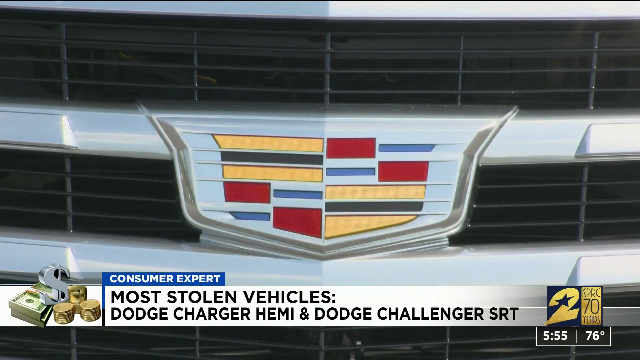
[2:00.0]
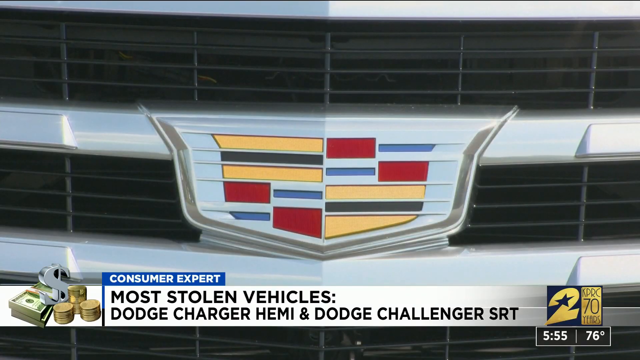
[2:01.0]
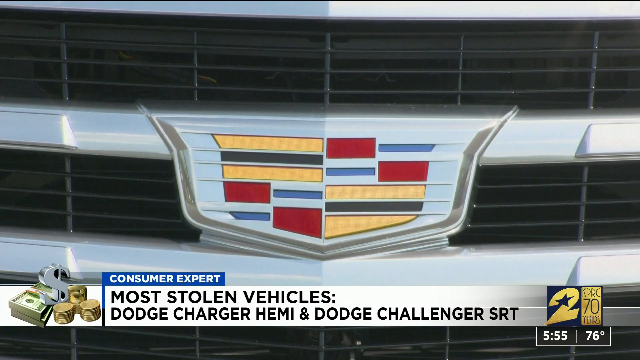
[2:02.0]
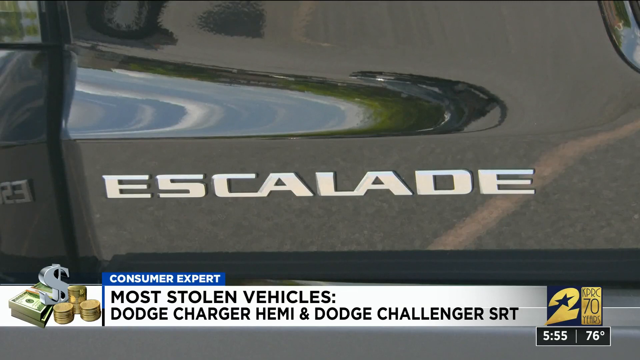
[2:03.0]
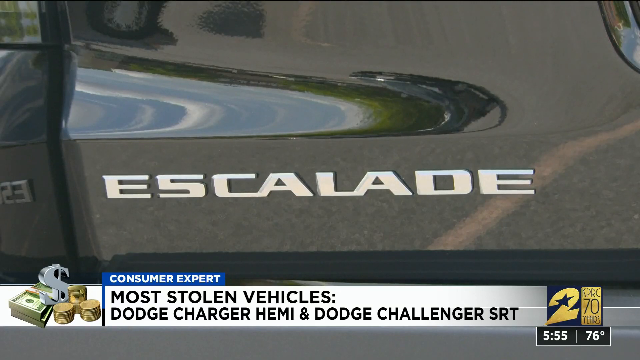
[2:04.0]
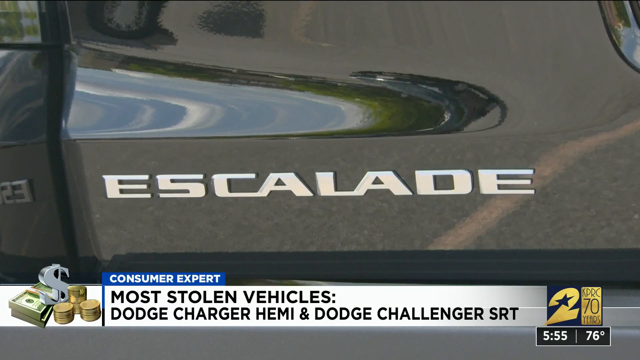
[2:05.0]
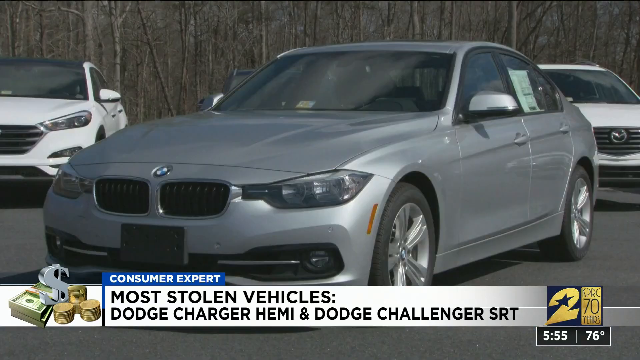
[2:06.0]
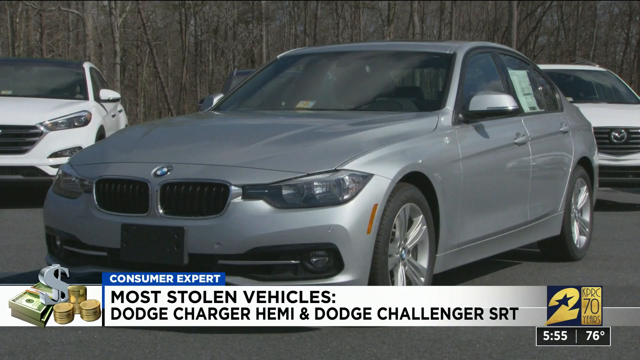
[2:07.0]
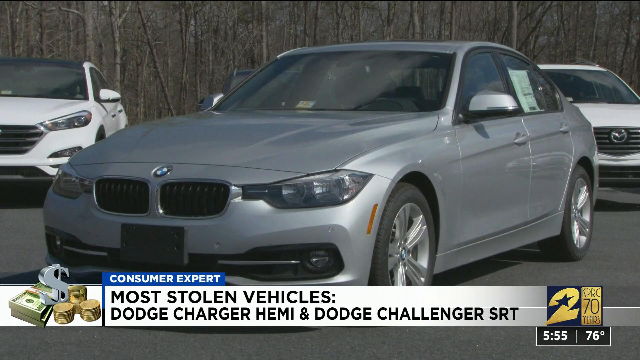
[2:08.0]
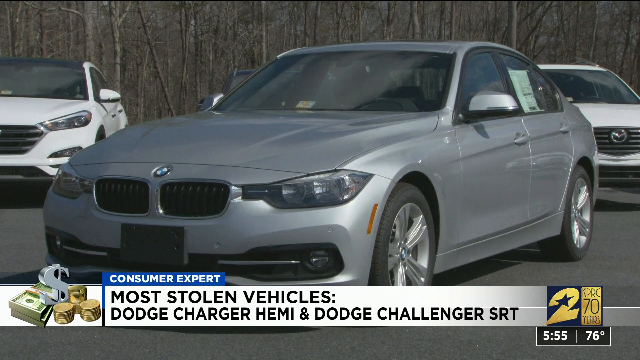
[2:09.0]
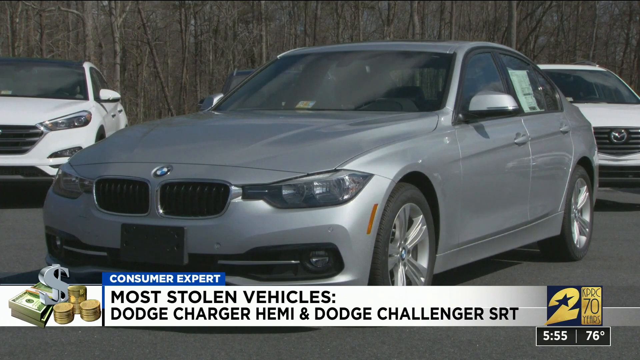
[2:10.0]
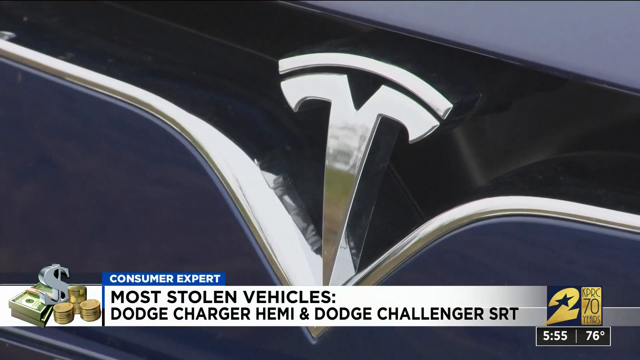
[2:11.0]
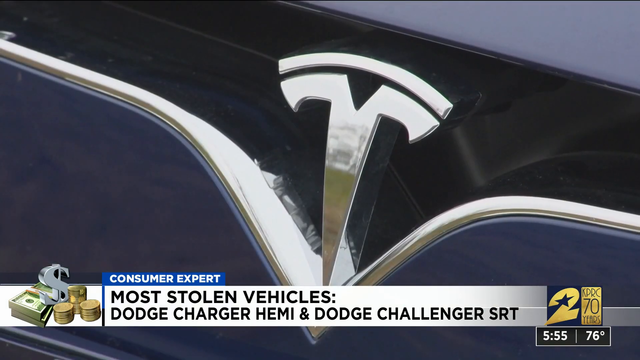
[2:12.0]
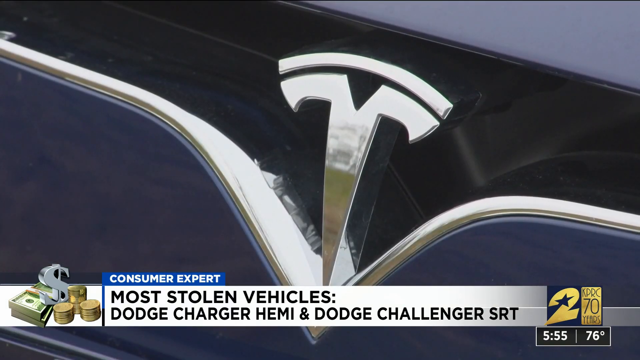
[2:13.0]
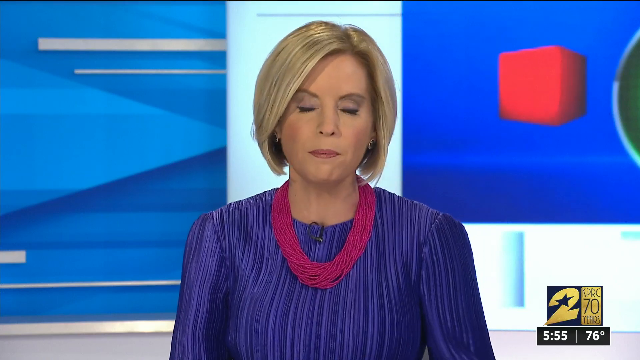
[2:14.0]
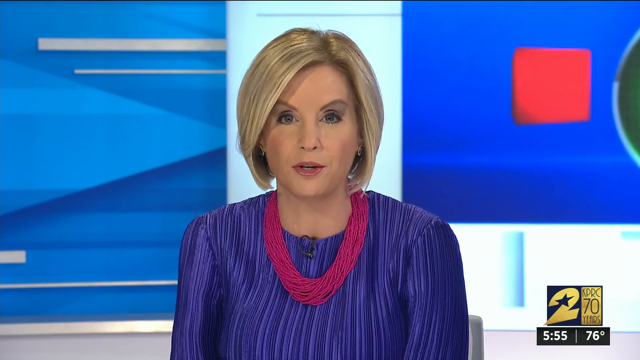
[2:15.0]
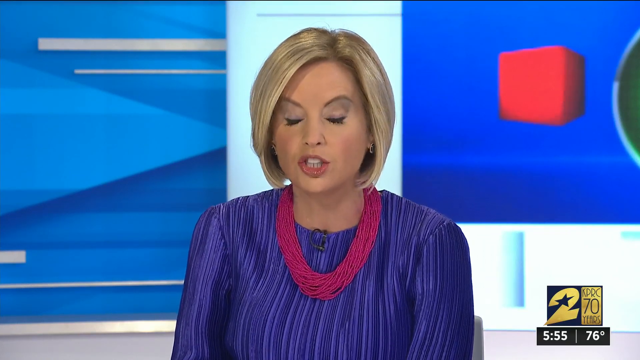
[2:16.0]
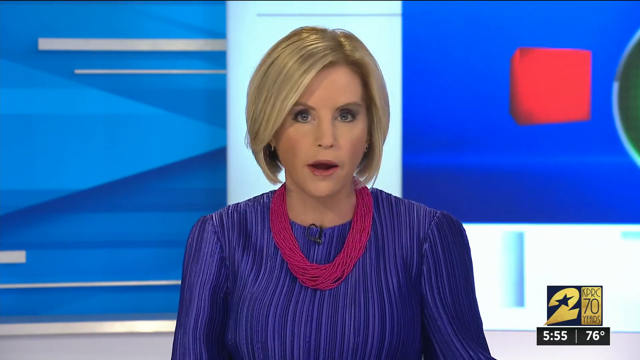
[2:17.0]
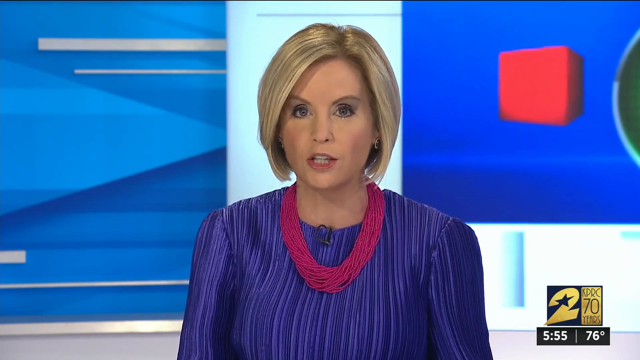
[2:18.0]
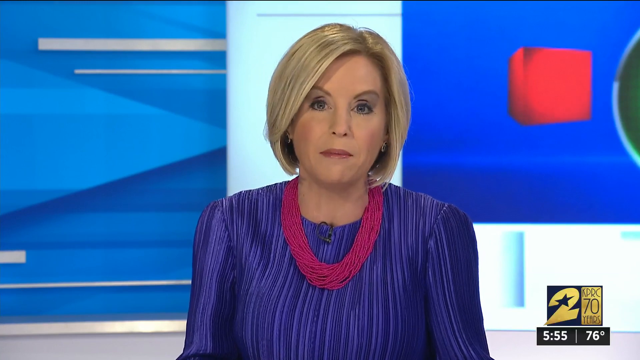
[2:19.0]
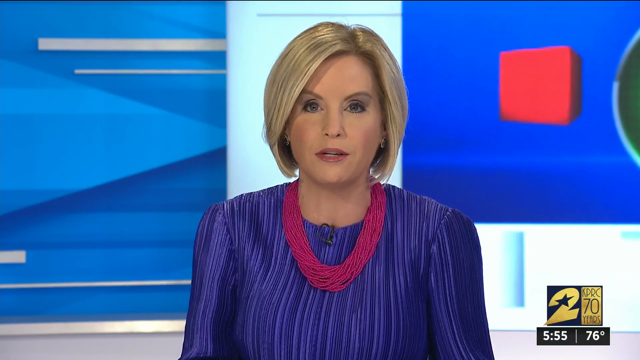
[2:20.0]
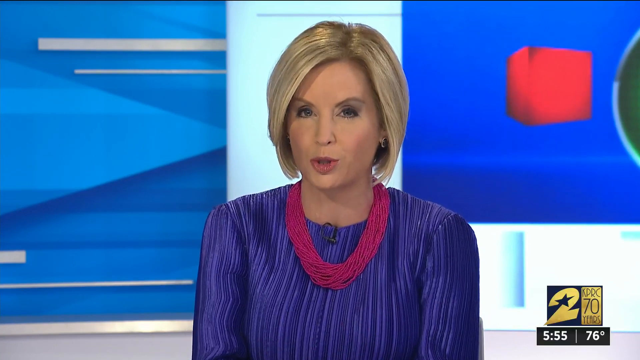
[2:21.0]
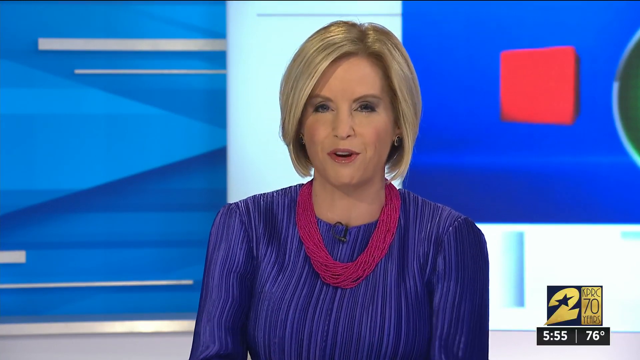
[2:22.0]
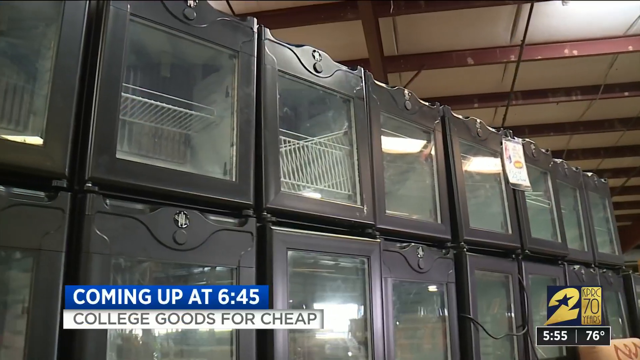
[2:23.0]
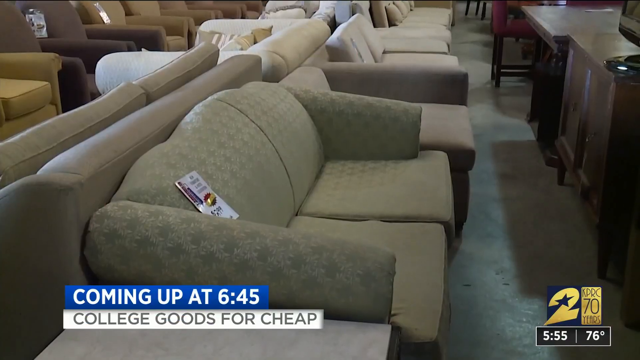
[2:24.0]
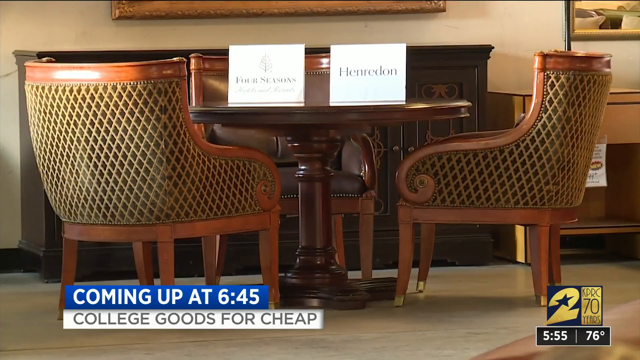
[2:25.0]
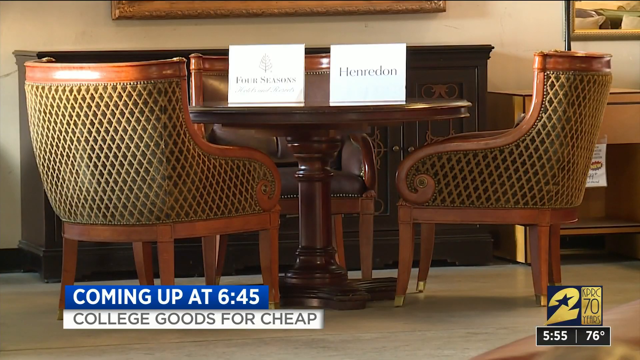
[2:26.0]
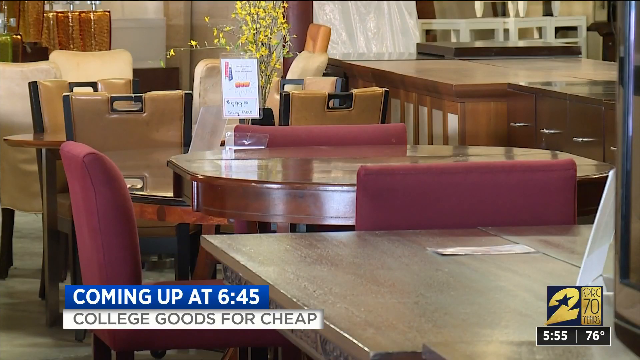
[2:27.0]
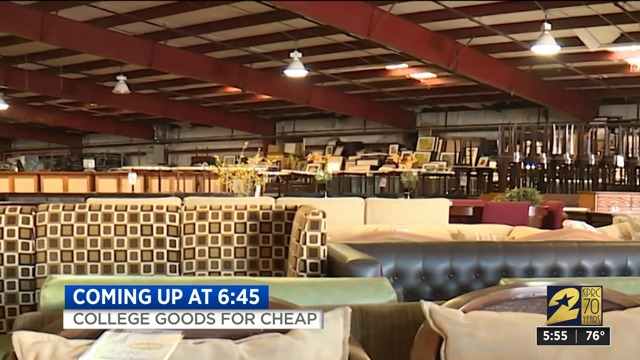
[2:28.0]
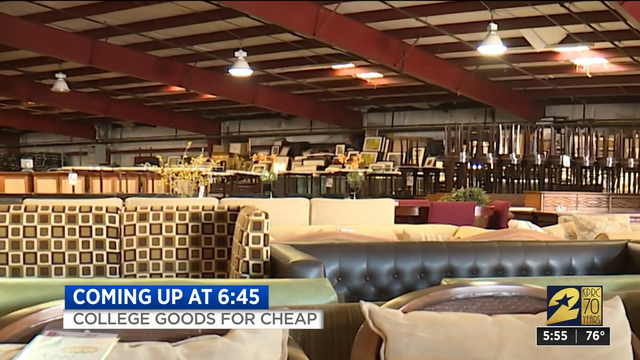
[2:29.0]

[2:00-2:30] A close-up shows the Cadillac logo on the silver front grille of a car. At the bottom of the screen is a white rectangular box with a blue label on top at the top left reading "consumer report", and inside the box, in bold black font, "most stolen vehicles, Dodge Charger Hemi and Dodge Challenger SRT". Next is a close-up of the Escalade name logo on the side of a shiny black car. Then a gray four-door BMW sedan is parked in a parking lot, which looks like a dealership, with a white sticker on the window and plain black plates. A close-up follows of a silver Tesla logo on the front of a dark blue Tesla car. The video then changes to a woman news reporter with a blonde bob haircut wearing a dark purple long-sleeved blouse and a thick, stringy dark pink necklace, speaking to the camera. The screen changes to what looks to be a stack of black ovens of some sort, maybe portable ovens, with white grills visible in the middle. Then what looks like a stack of stools stacked on top of each other, maybe in some type of store or showroom. Next, what looks to be a bunch of couches in a furniture store, along with a small dining room set with a circle table and three chairs around it. Another large room looks like it has lots of different dining room tables and chairs, some shop or showroom. A kind of zoomed-out video pans the store, which looks like it sells furniture, showing stools stacked on each other, lots of different dining room sets and sofas. A wall has a bunch of pictures and picture frames stacked up and leaning against each other. In the bottom left corner of the screen, a blue rectangular box reads in white font "coming up at 6:45", and underneath, a white rectangular box reads in black font "college goods for cheap".